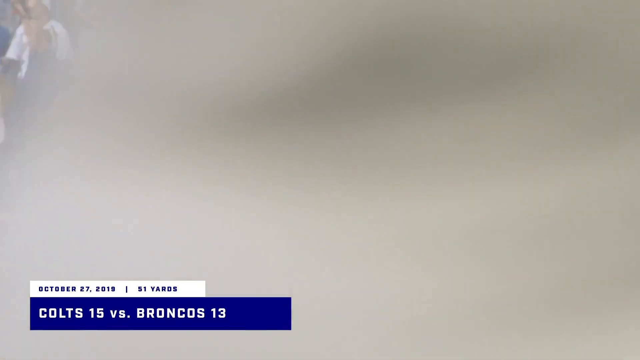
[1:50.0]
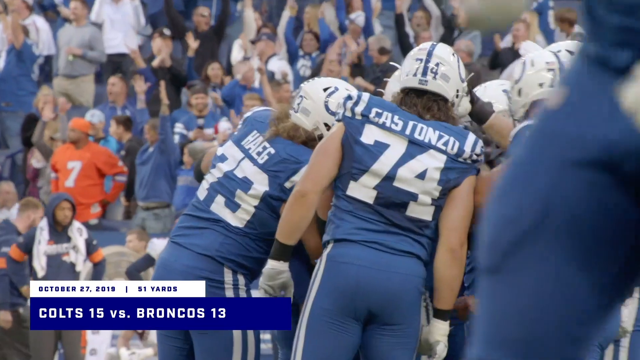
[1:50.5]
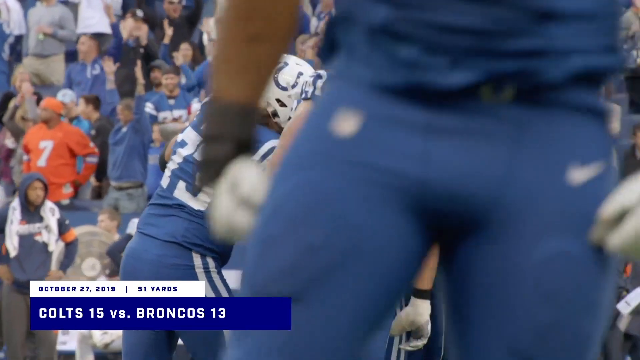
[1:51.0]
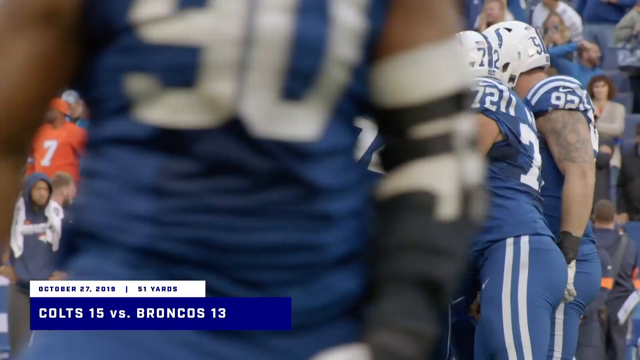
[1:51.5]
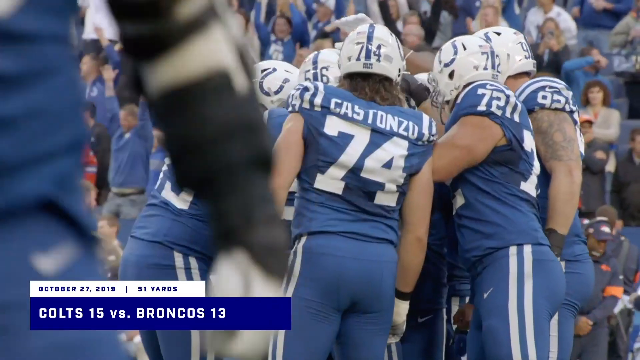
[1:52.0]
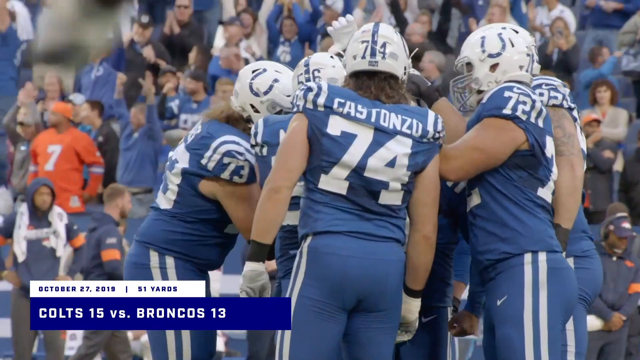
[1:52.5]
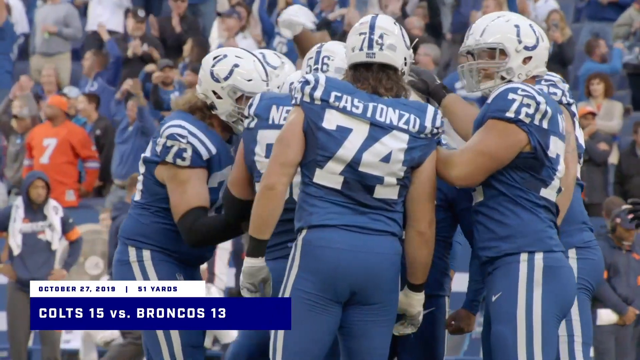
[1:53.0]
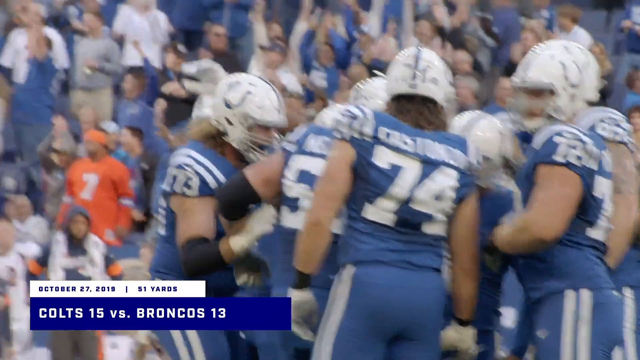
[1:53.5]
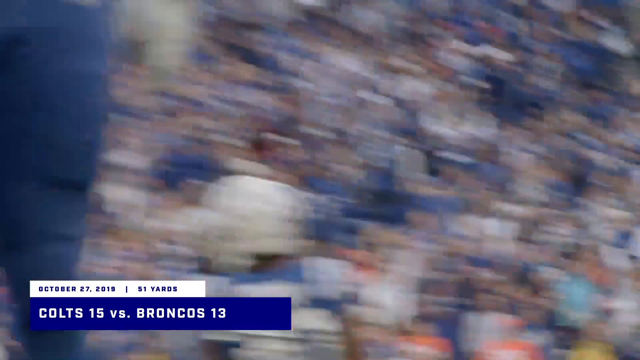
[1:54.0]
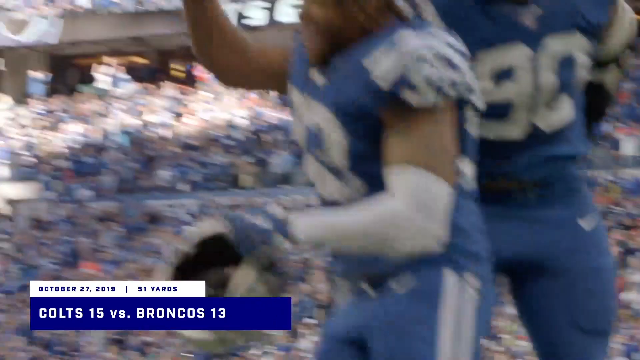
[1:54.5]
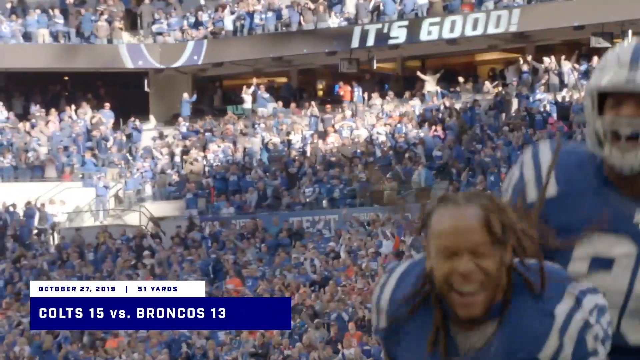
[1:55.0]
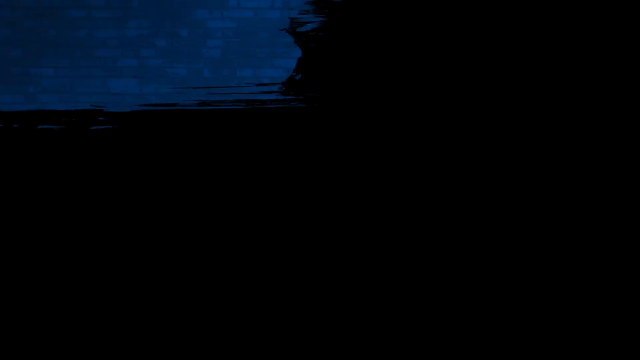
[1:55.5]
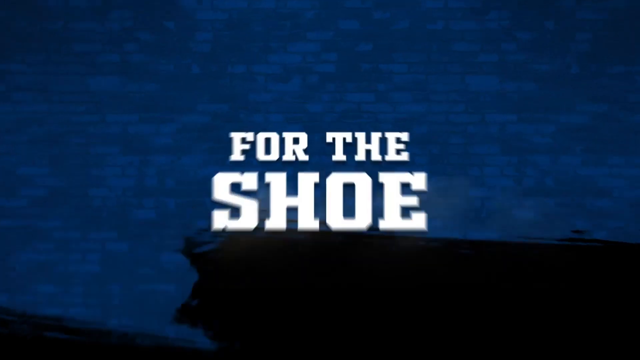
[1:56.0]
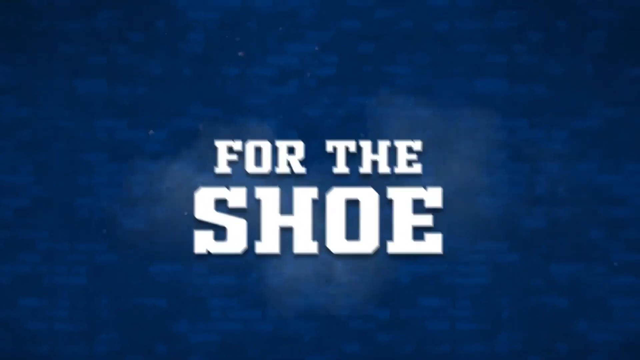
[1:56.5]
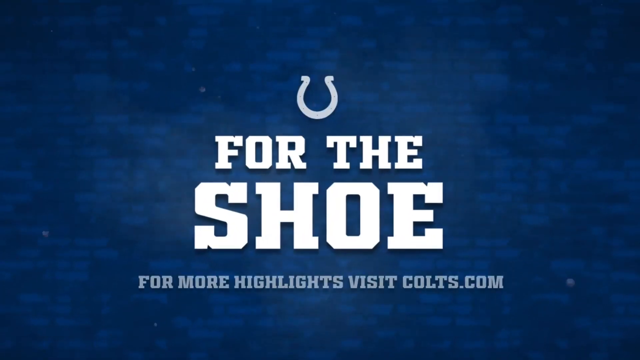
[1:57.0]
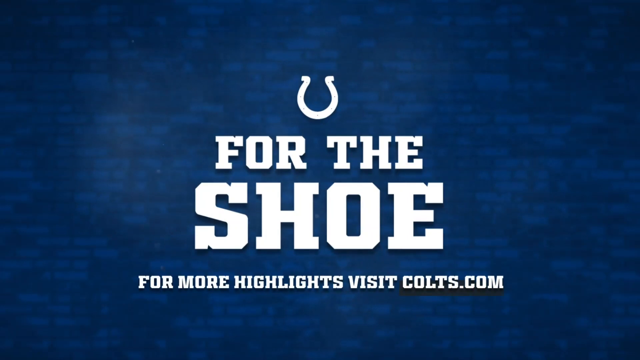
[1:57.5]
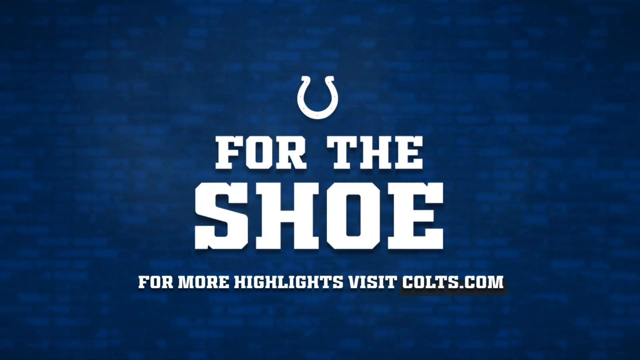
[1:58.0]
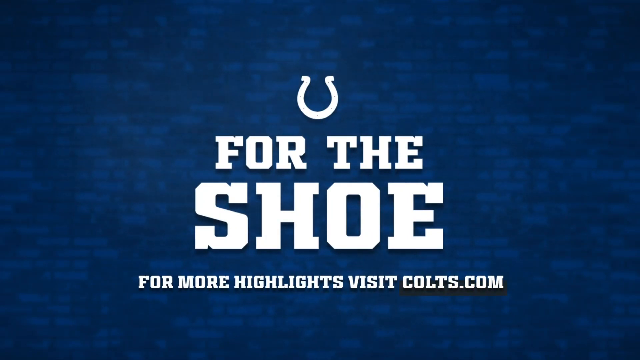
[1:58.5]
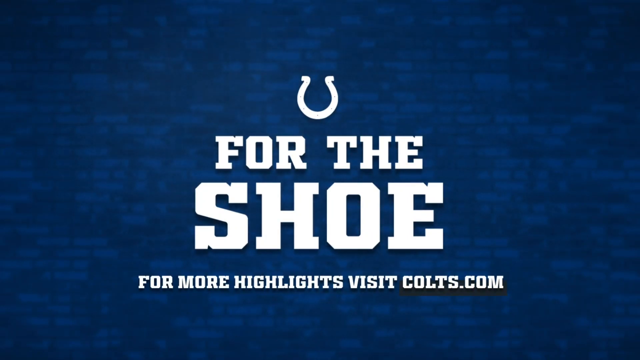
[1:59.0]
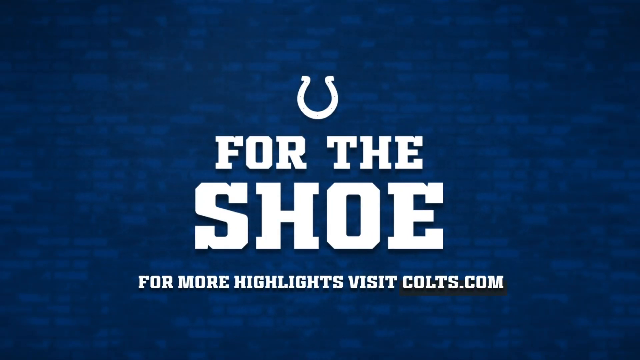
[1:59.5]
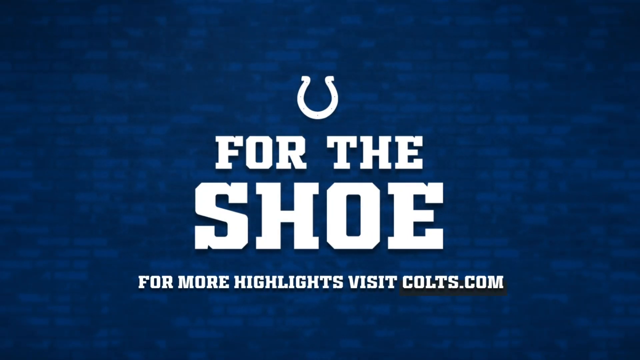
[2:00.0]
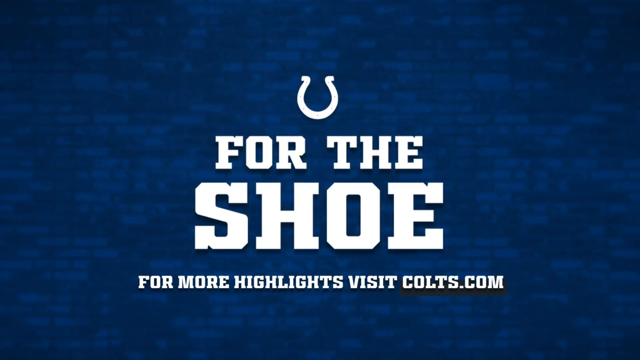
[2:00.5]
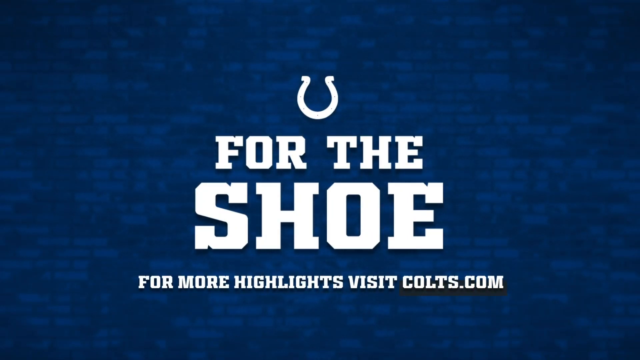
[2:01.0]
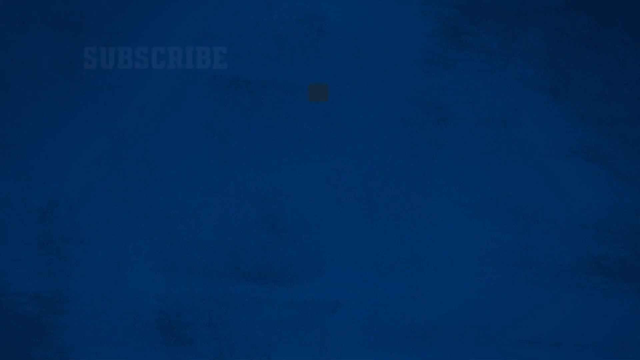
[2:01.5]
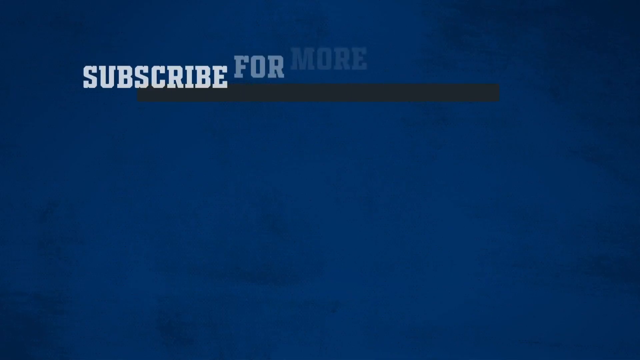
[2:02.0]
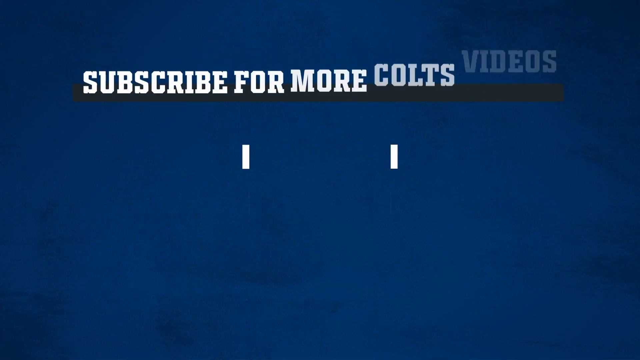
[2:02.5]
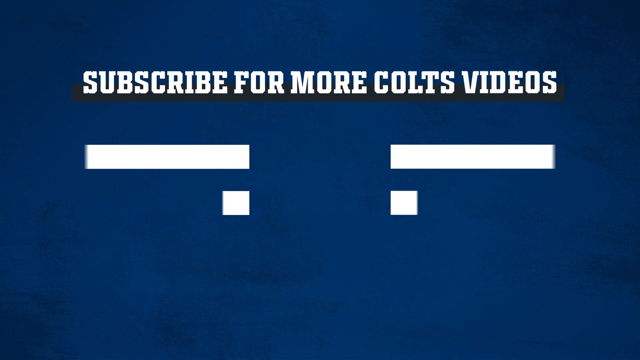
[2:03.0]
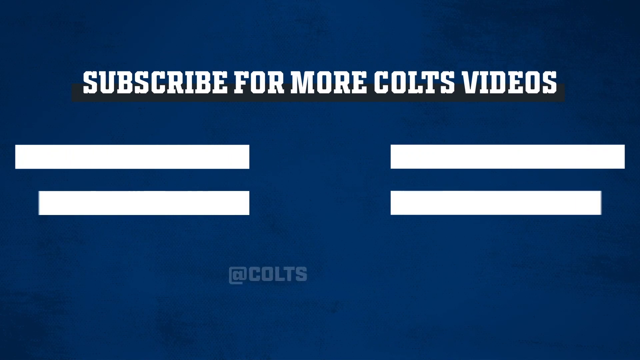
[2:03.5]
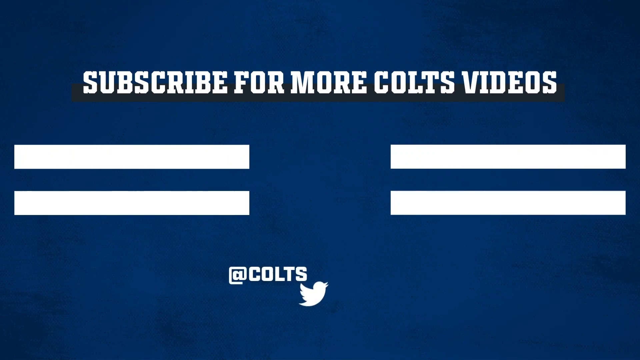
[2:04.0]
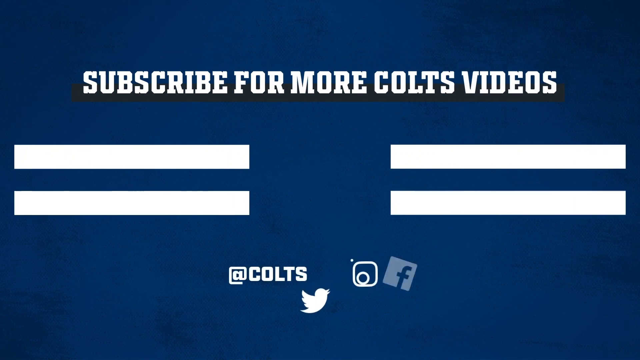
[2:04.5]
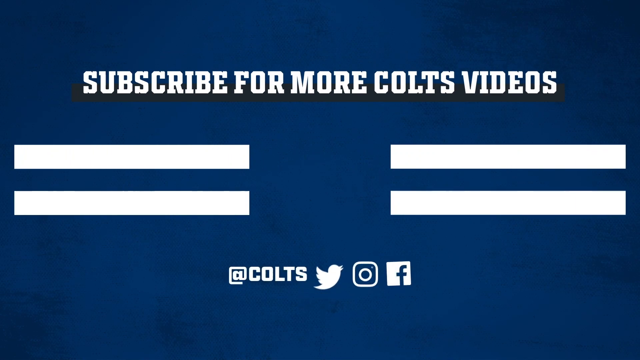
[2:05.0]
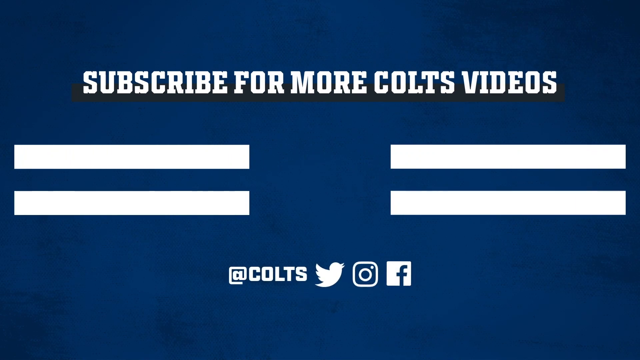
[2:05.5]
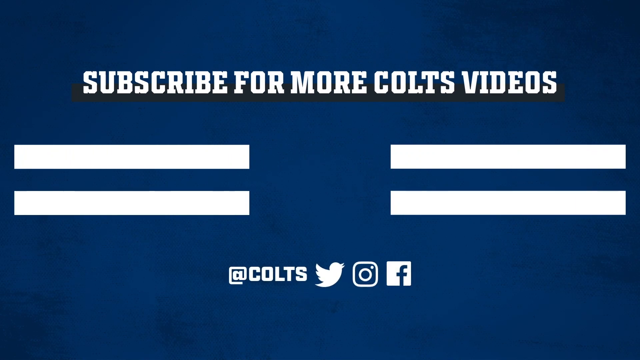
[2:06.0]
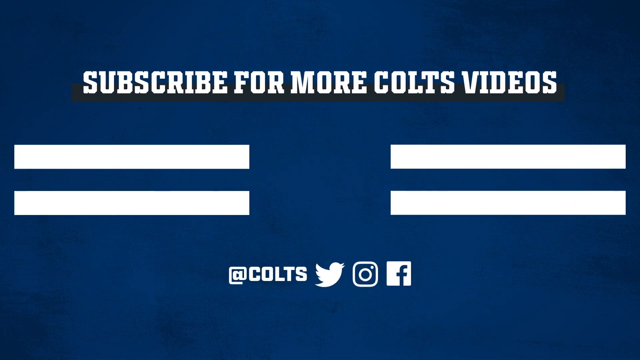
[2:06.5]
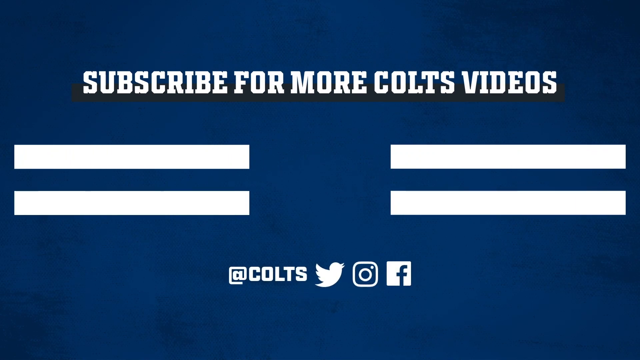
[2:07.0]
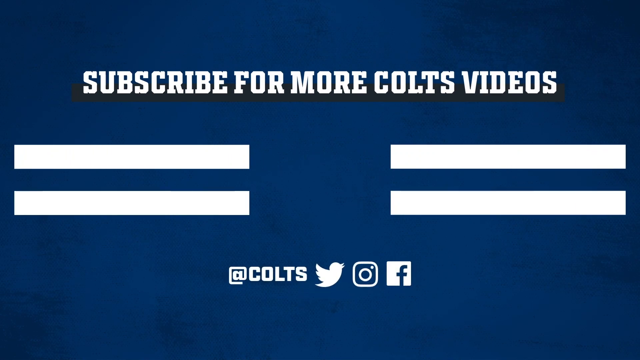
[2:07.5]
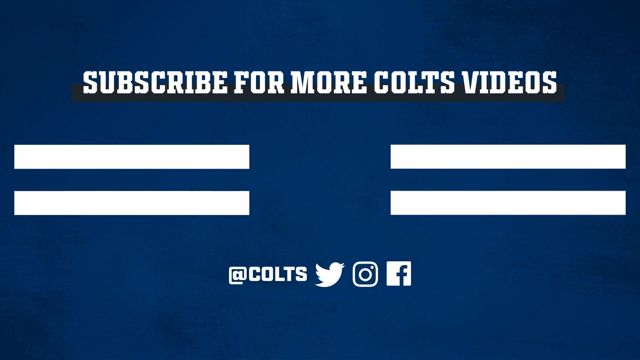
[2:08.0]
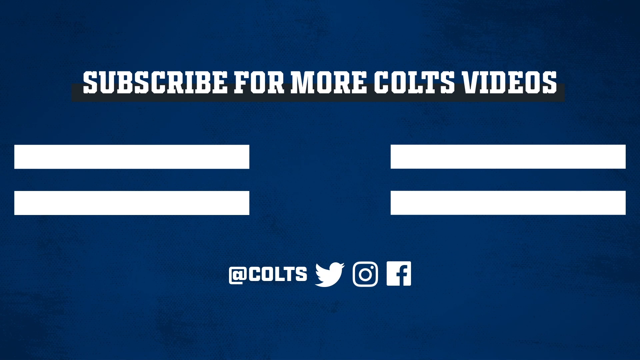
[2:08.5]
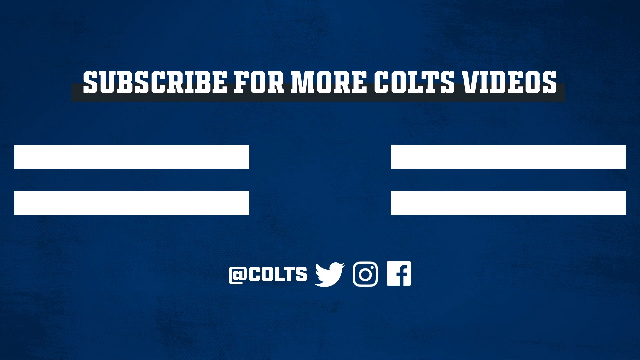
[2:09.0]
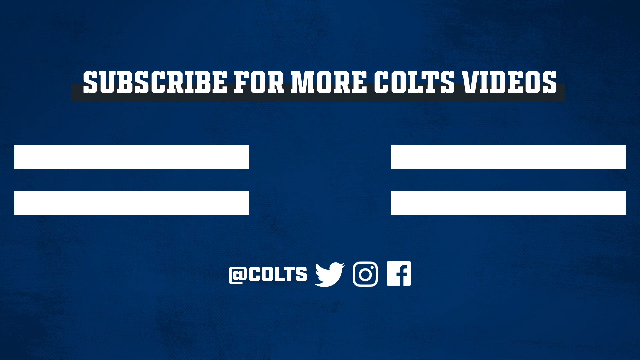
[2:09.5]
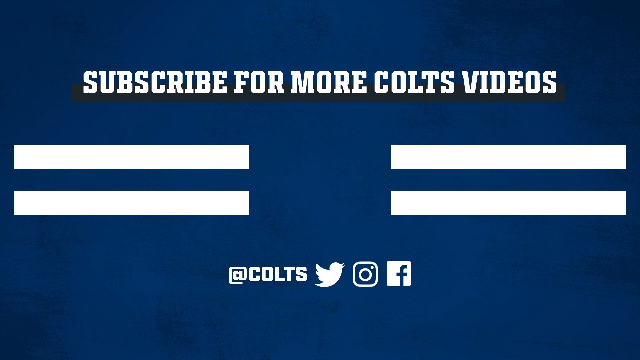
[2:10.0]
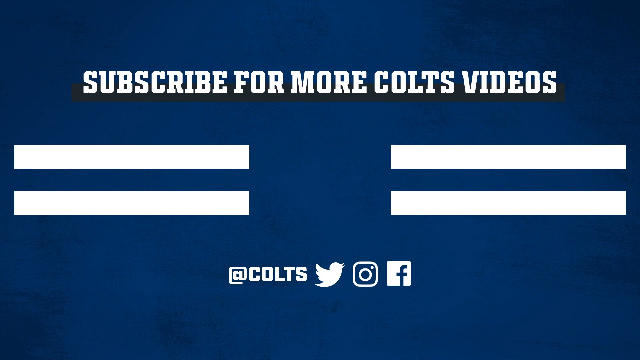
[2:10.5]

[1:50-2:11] A group of approximately six Colts players huddle together in blue jerseys, apparently the home jerseys, with numbers 74, 72 and 92 visible. Another Colts player is in the foreground. The bottom of the screen shows the date "October 27th, 2019"; this is a successful 51-yard field goal in a game against the Broncos. End credits follow, reading "For The Shoe" and "For more highlights, visit Colts.com," followed by the Colts symbol. A blue screen with white letters then reads "Subscribe for more Colts videos," along with Colts Twitter, Instagram and Facebook. It is probably the Colts' official YouTube channel.